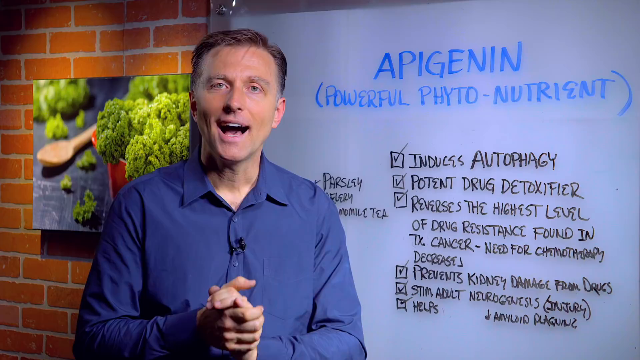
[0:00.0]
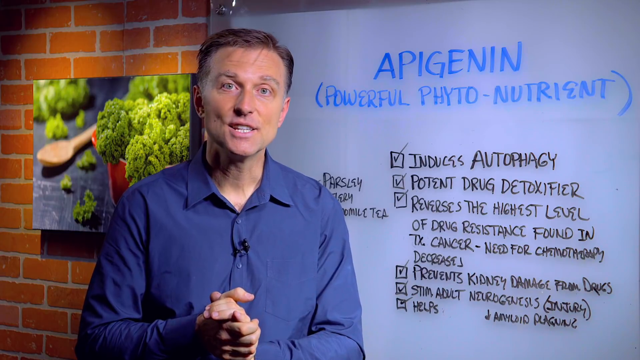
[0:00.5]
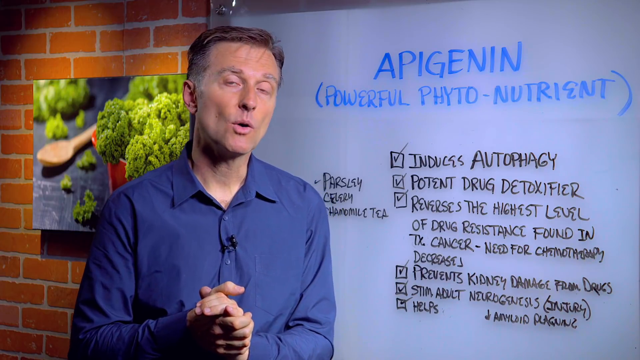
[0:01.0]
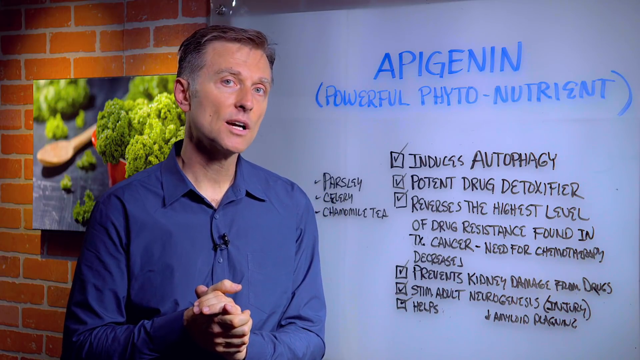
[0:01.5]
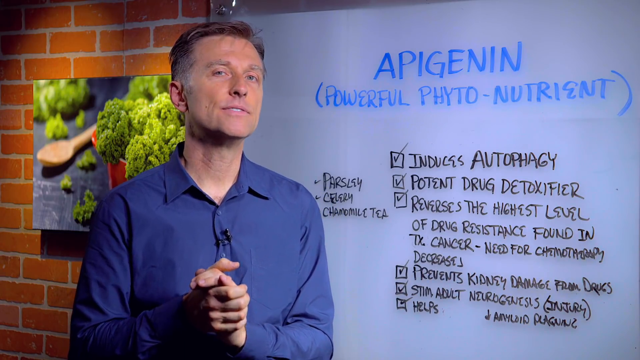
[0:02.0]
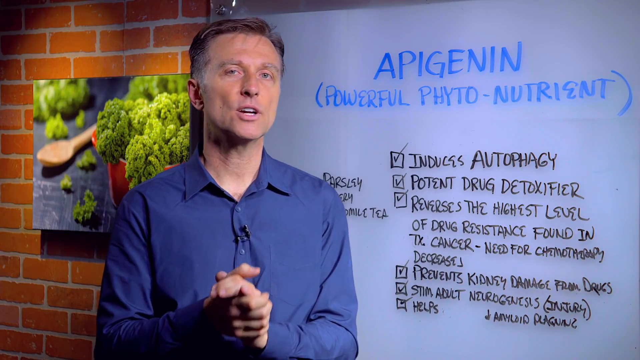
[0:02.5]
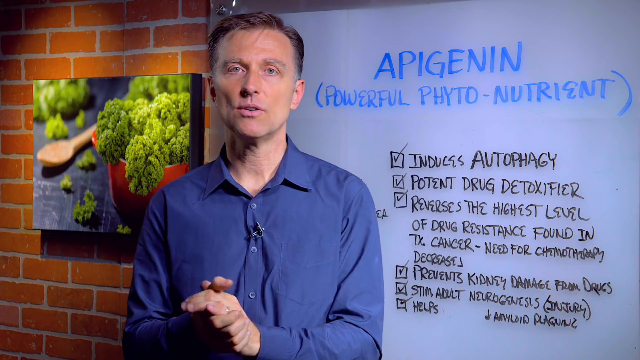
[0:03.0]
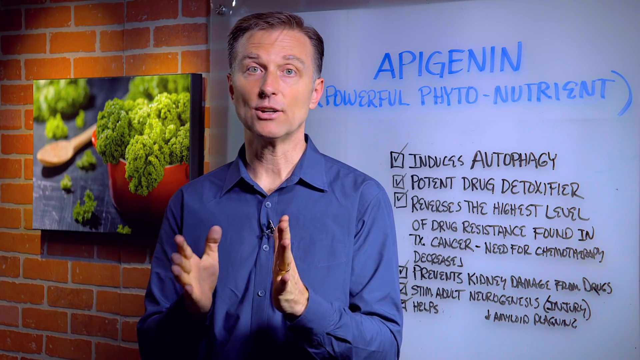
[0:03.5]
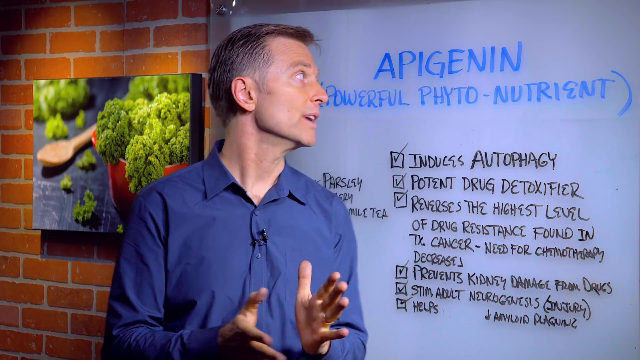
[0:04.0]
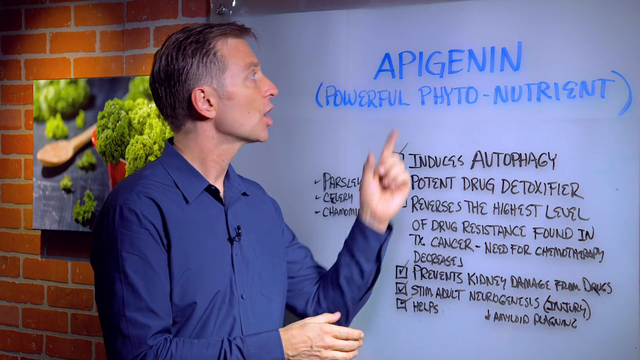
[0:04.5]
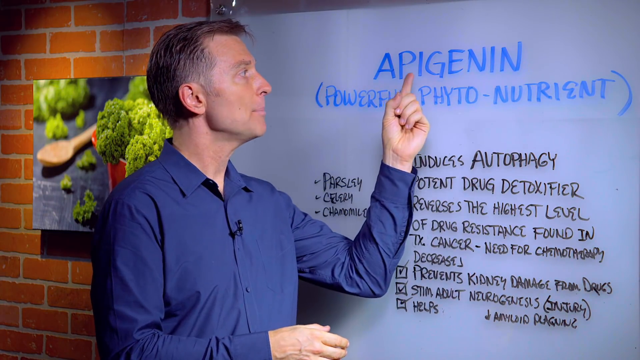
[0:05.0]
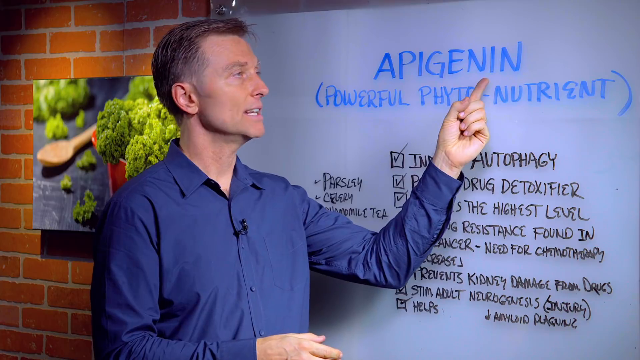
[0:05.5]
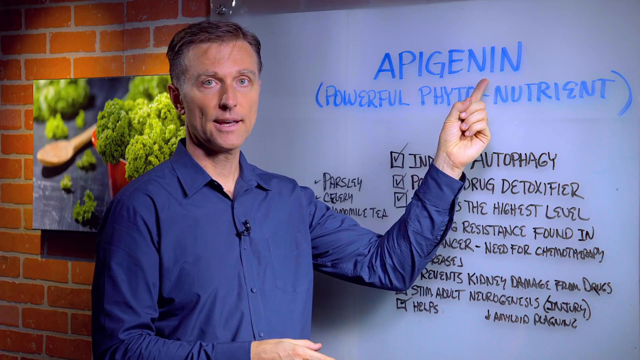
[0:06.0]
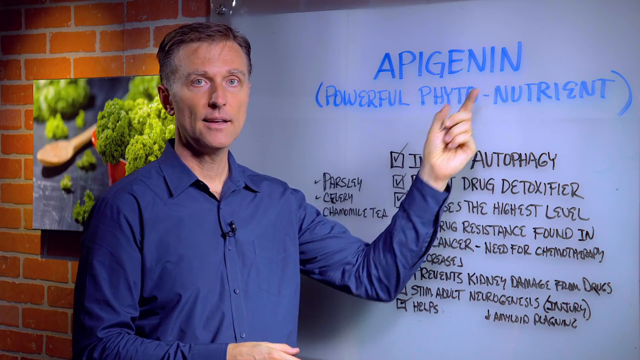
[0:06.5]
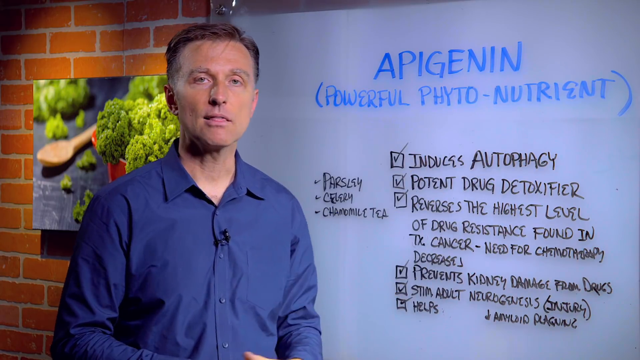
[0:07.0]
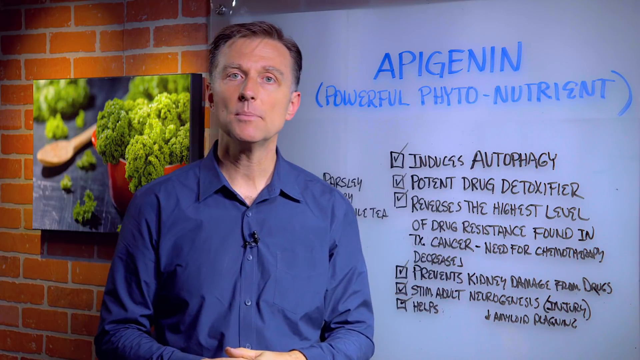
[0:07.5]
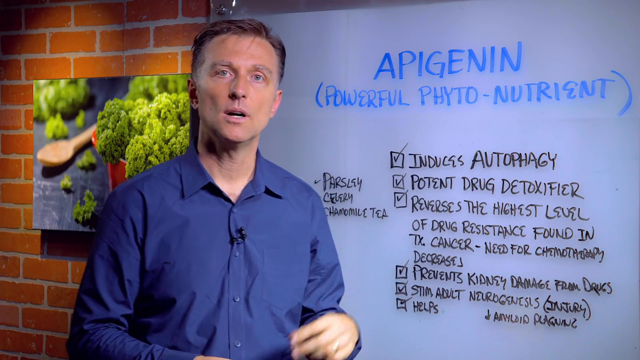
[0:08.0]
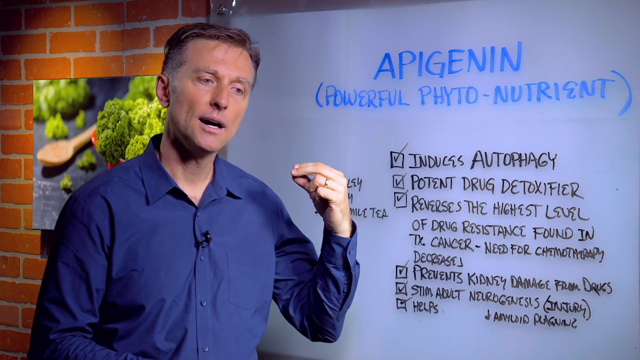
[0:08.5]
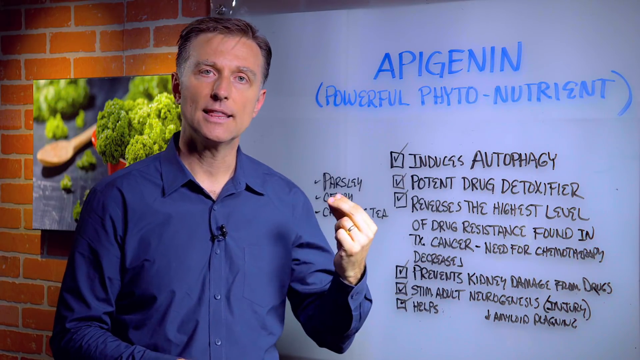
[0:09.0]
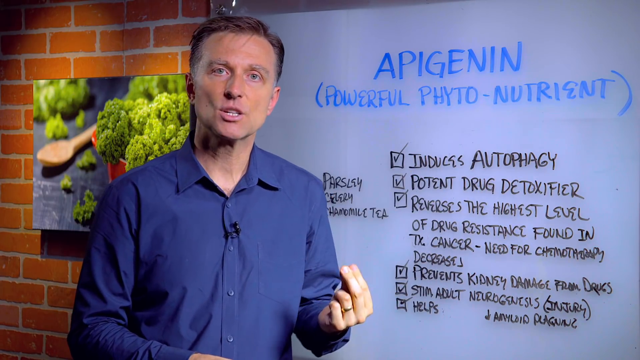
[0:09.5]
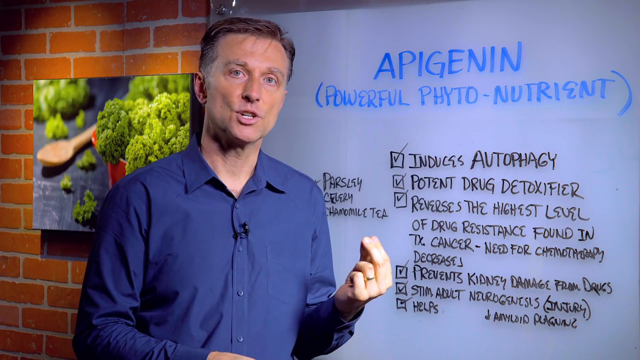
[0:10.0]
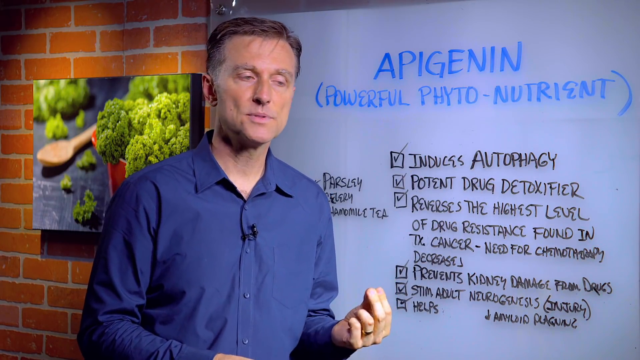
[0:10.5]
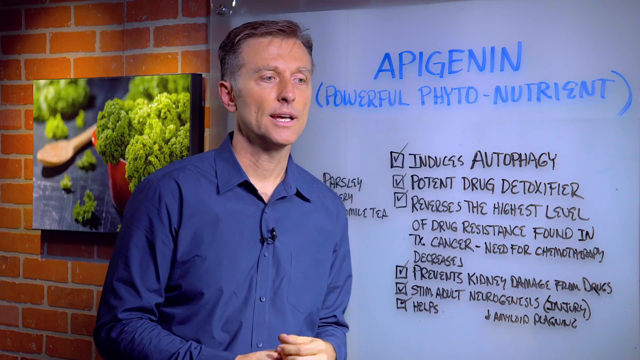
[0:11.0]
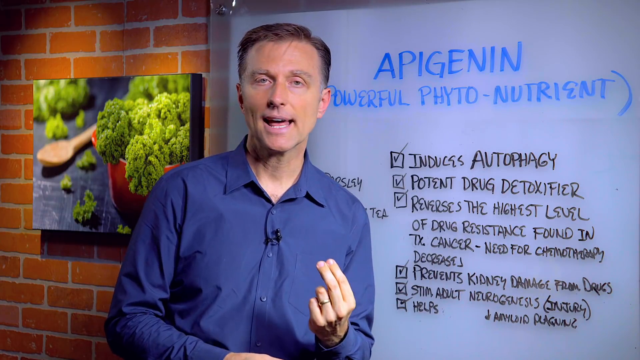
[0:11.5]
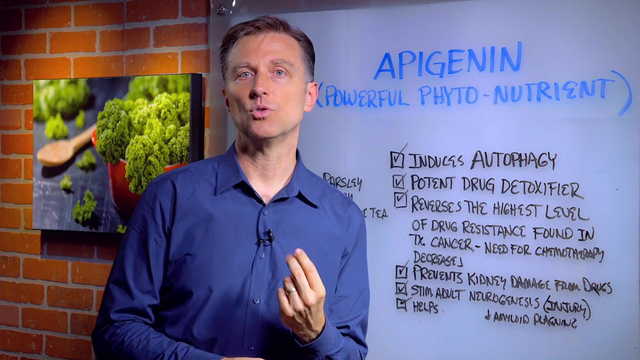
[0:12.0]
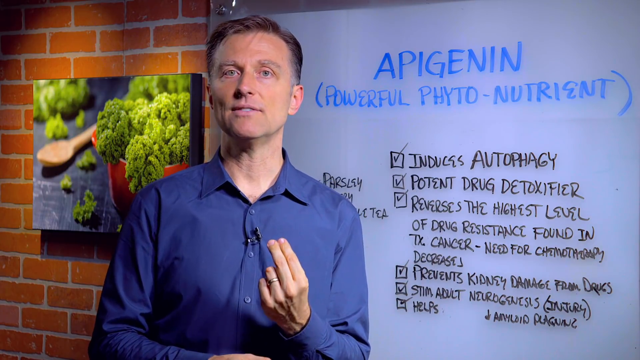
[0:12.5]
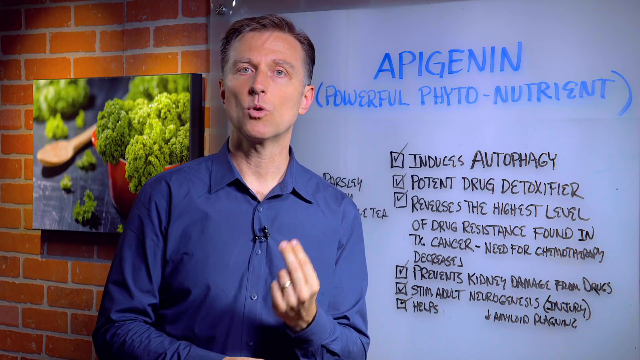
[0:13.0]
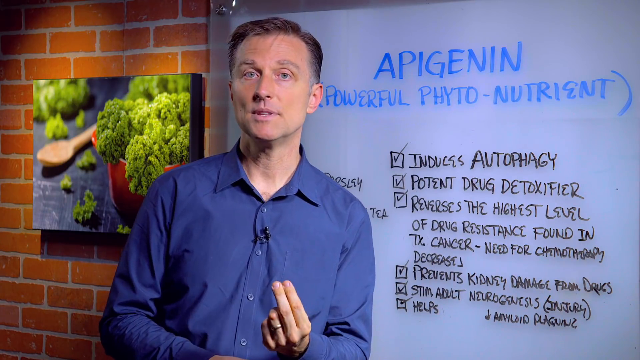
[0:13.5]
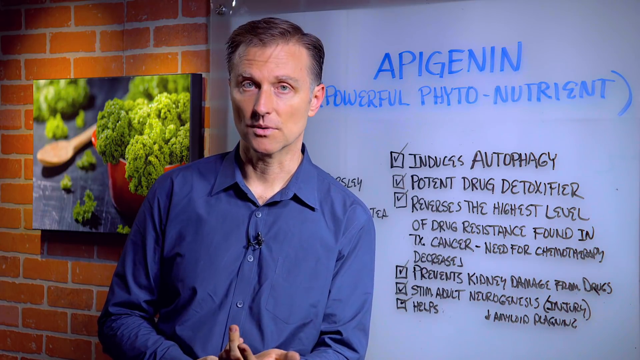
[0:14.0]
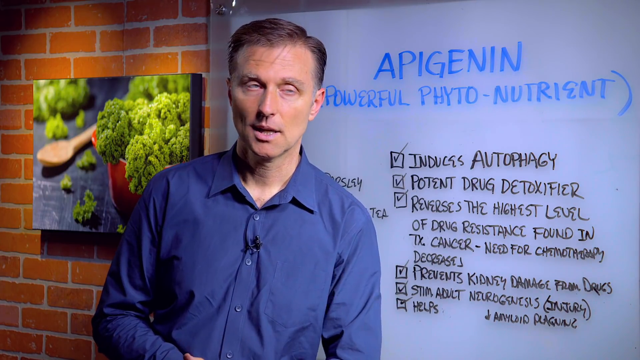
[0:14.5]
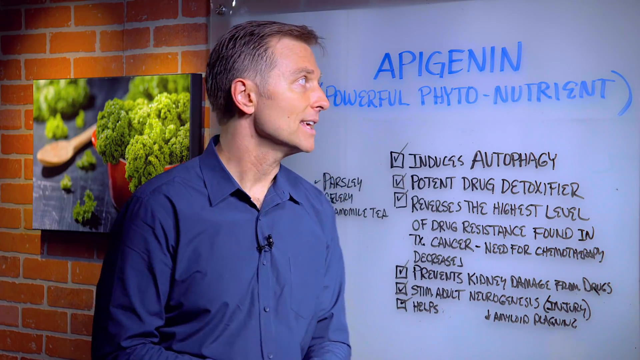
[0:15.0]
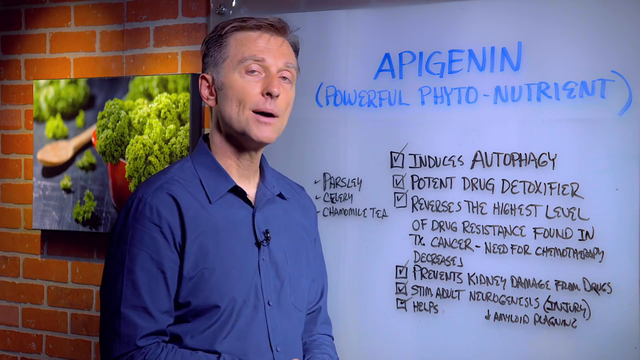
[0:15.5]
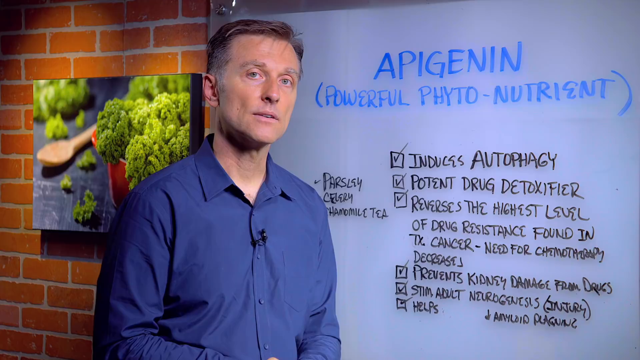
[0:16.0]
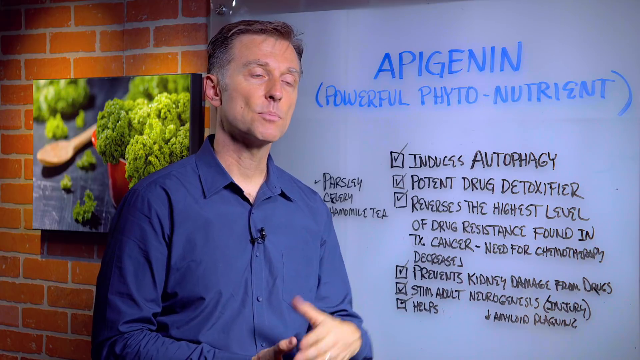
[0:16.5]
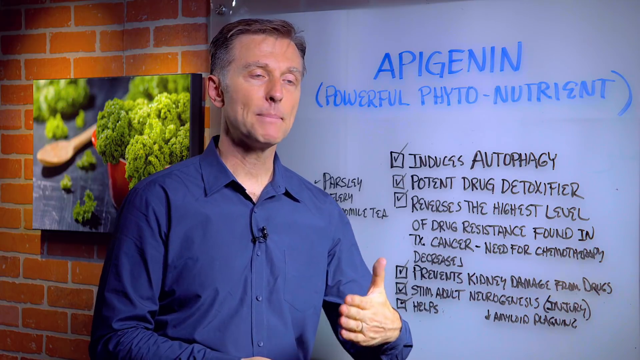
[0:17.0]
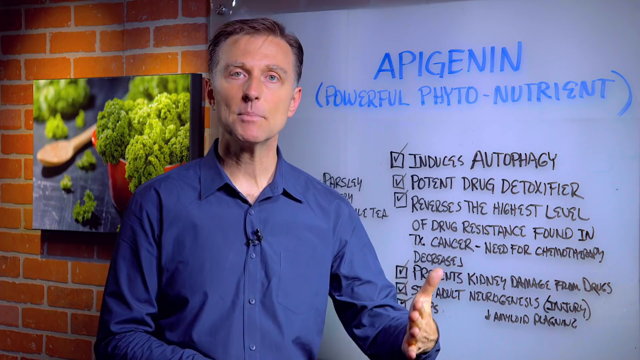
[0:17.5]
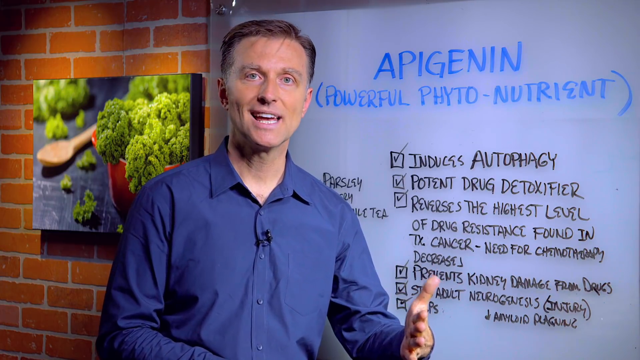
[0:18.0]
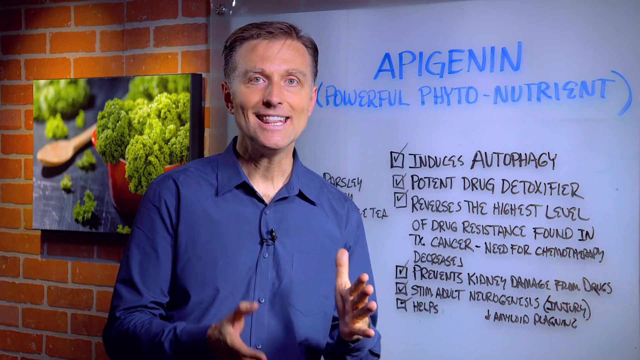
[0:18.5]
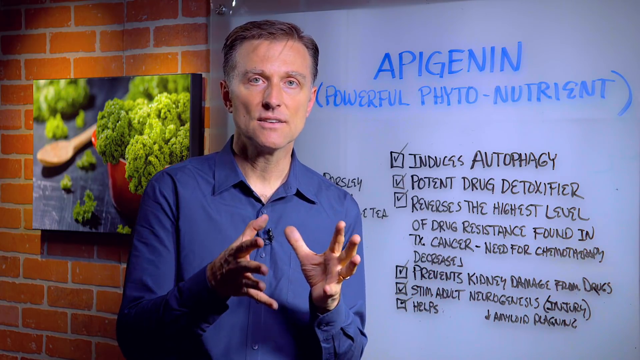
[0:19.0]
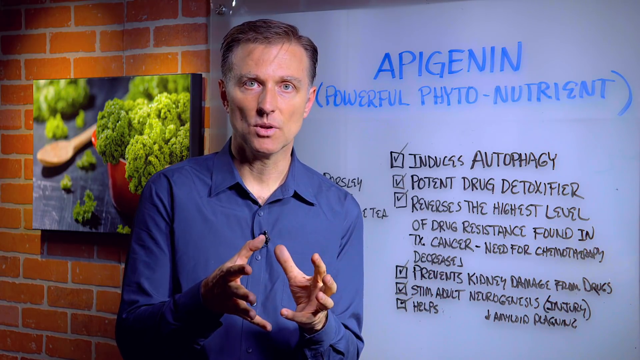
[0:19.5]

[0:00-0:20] A man talks directly to the camera. He wears a blue button-down shirt with a microphone clipped to the front. He stands in front of a whiteboard, which is over his left shoulder; over his right shoulder is a picture of broccoli in a square frame, hanging against a brick wall. The picture shows broccoli in a red bowl, broccoli bits on the table, and a wooden serving spoon. The whiteboard has words about apigenin, the powerful phytonutrient. The man claps his hands together, then unclasps them to point out the words on the whiteboard, and he puts his pointer finger, middle finger and thumb together as he speaks to make a point.